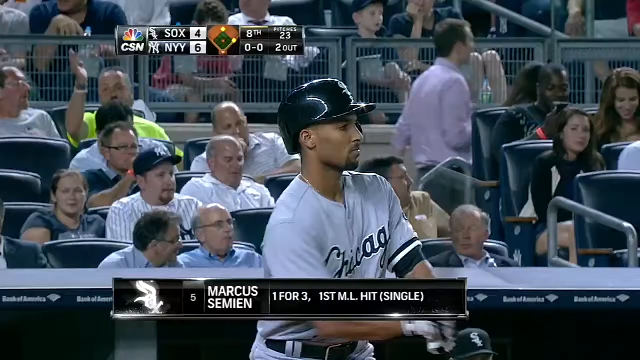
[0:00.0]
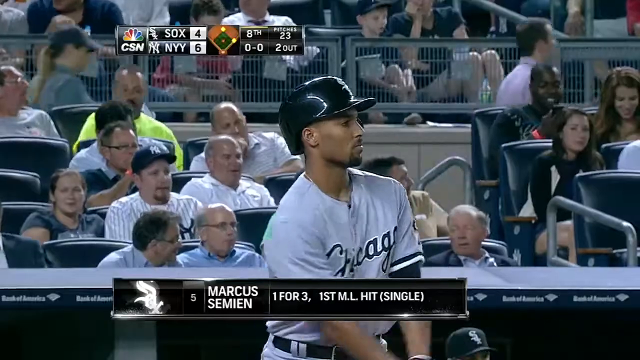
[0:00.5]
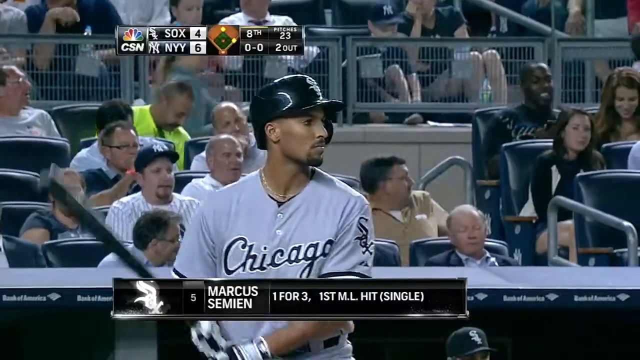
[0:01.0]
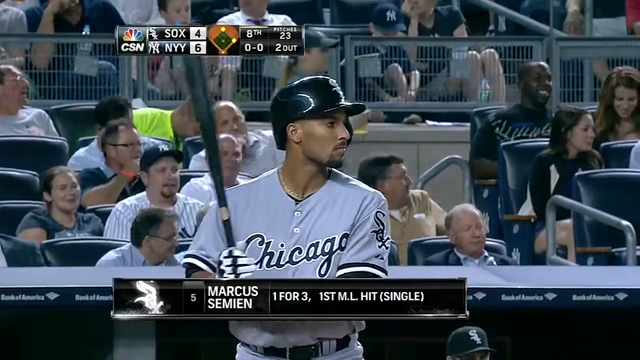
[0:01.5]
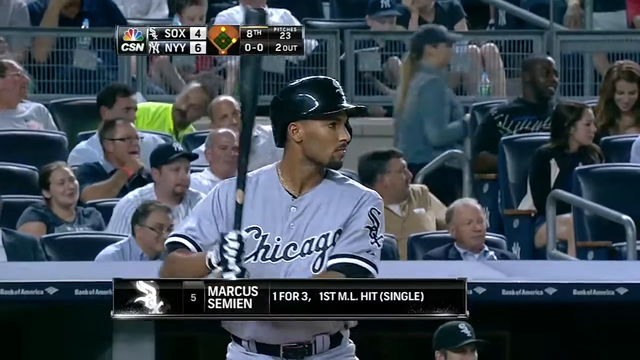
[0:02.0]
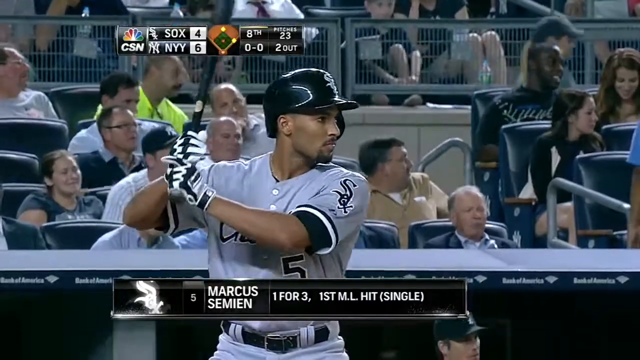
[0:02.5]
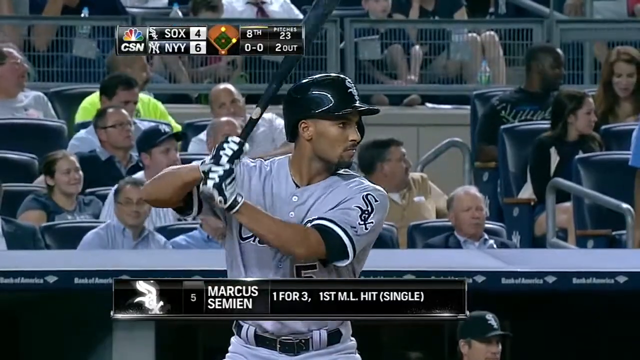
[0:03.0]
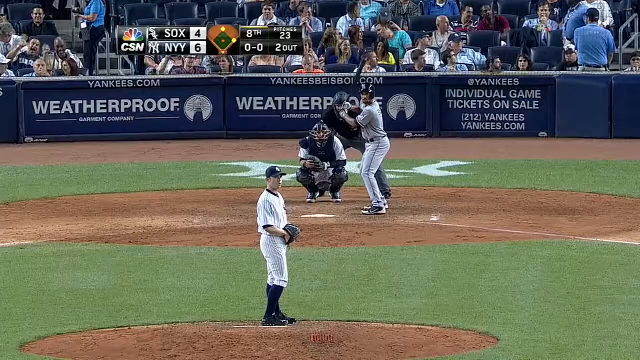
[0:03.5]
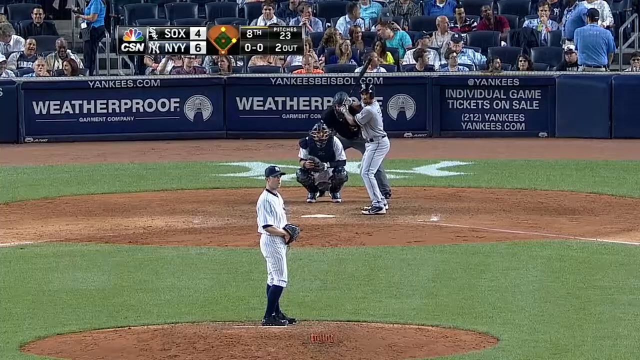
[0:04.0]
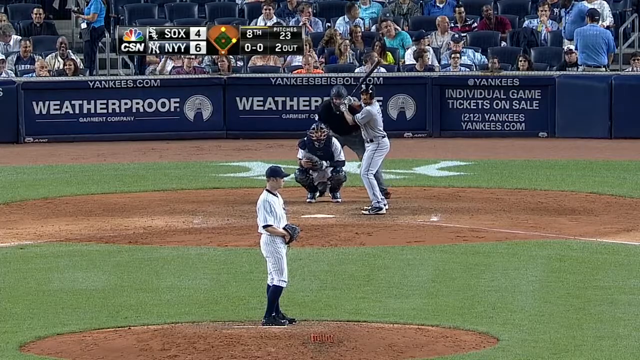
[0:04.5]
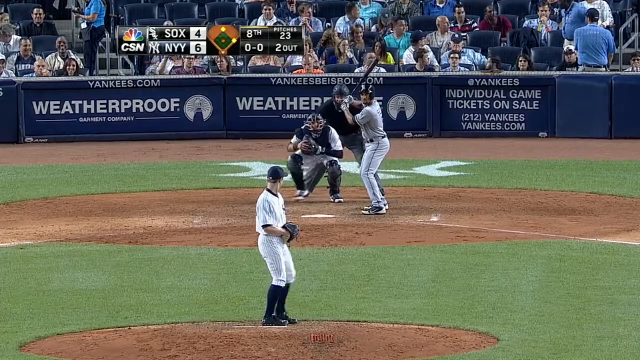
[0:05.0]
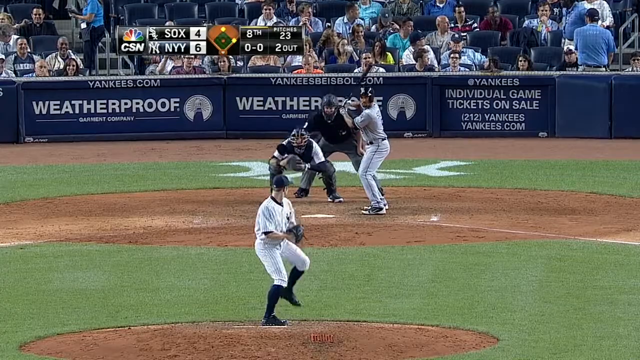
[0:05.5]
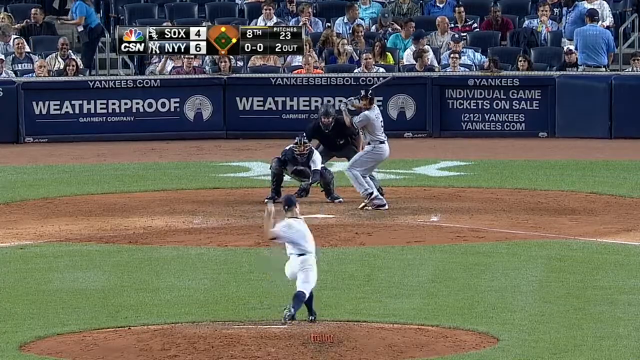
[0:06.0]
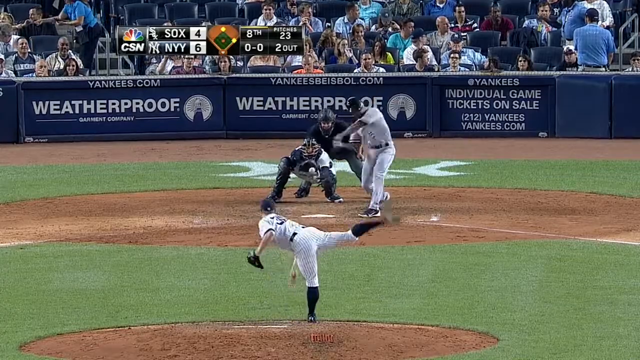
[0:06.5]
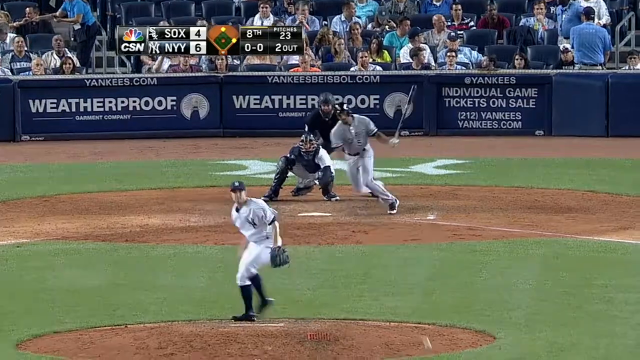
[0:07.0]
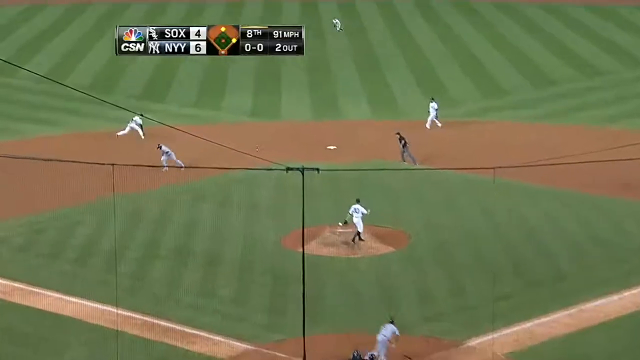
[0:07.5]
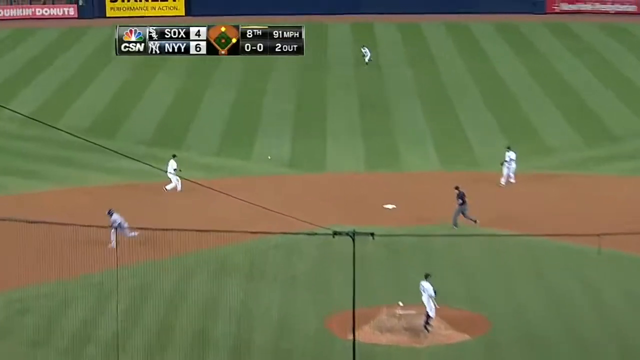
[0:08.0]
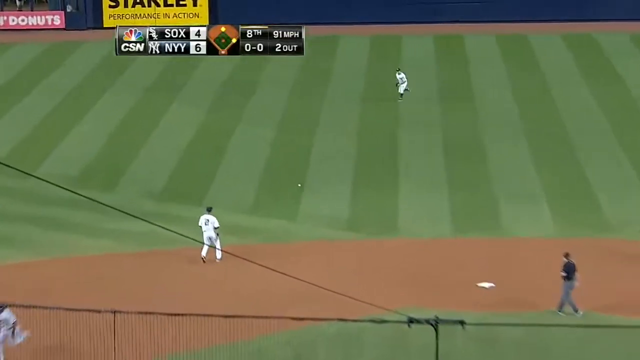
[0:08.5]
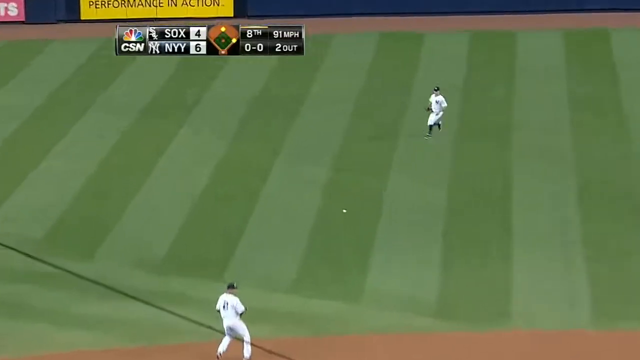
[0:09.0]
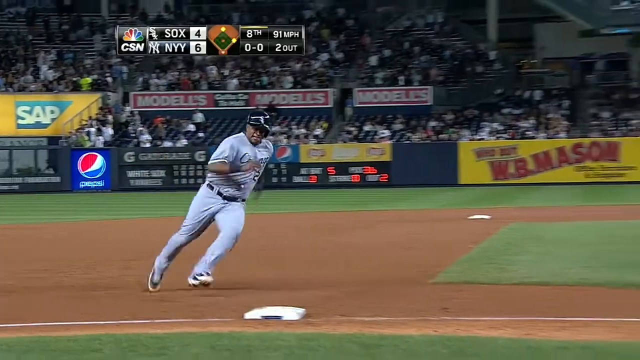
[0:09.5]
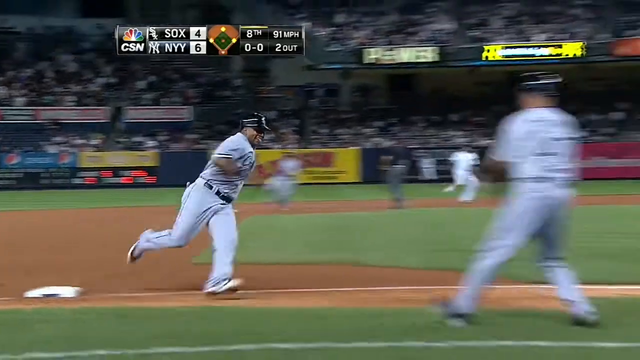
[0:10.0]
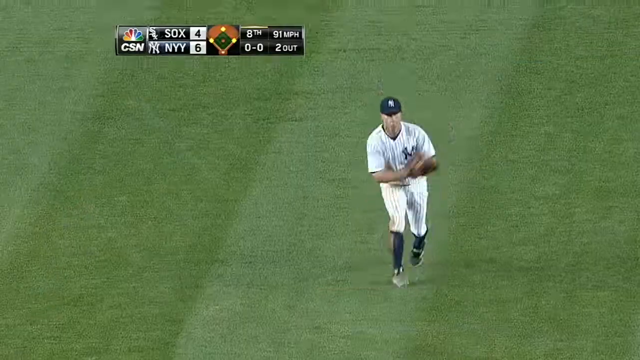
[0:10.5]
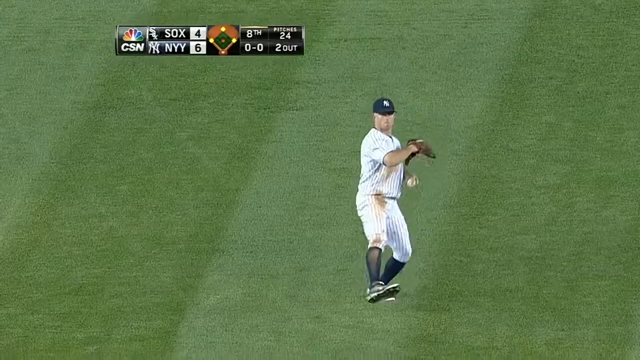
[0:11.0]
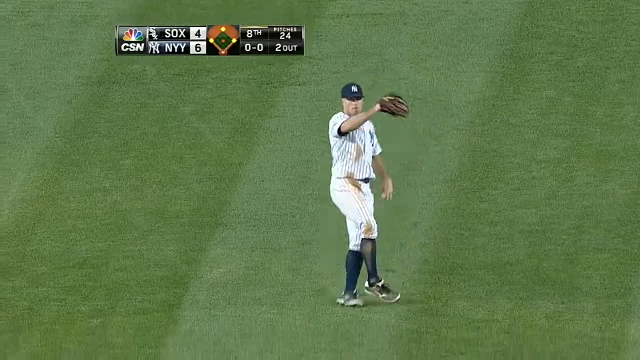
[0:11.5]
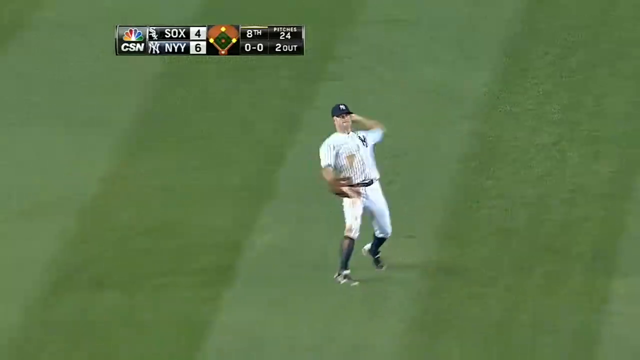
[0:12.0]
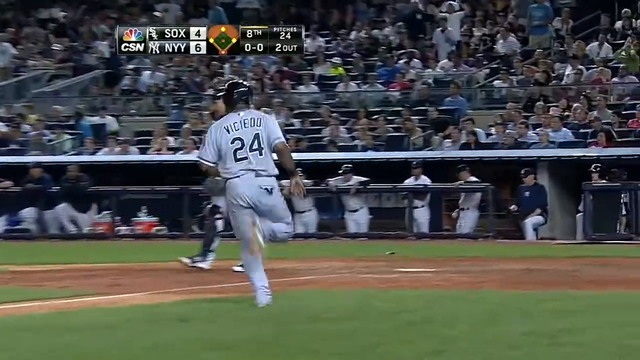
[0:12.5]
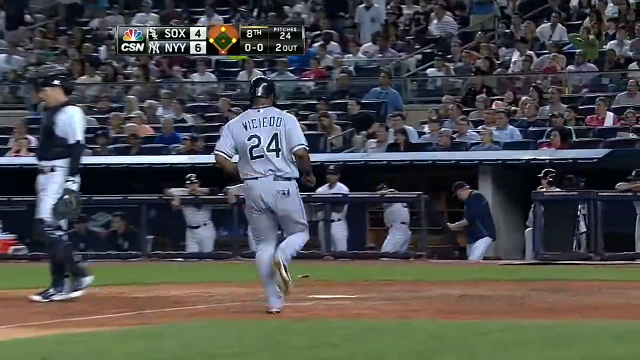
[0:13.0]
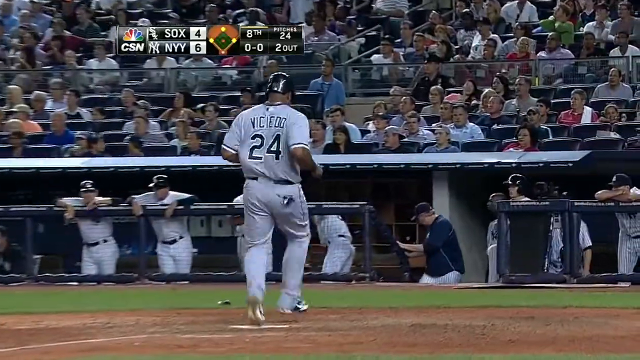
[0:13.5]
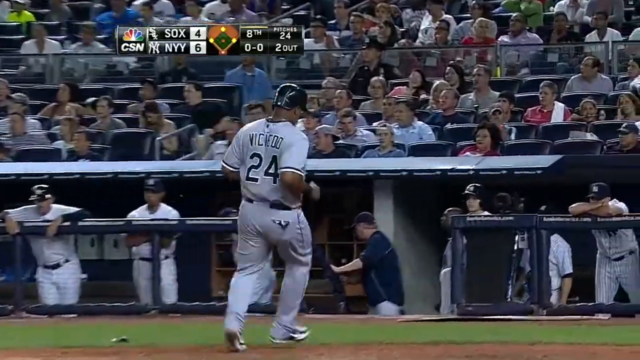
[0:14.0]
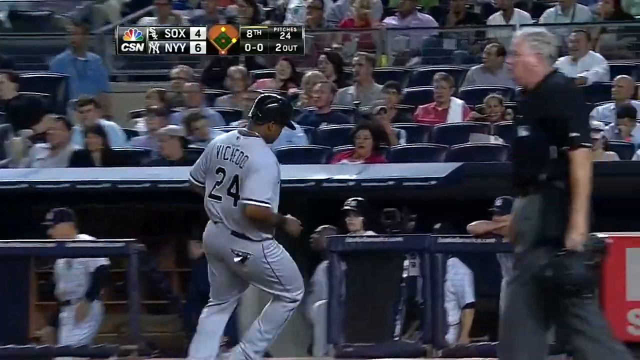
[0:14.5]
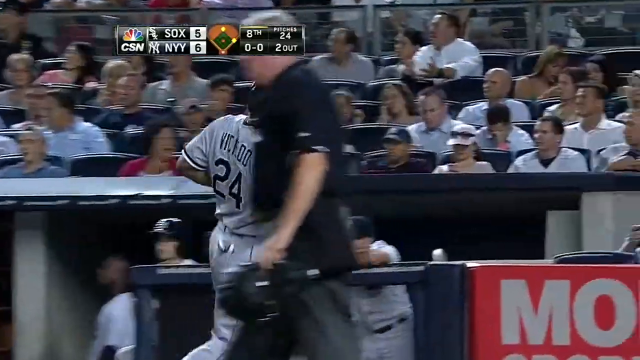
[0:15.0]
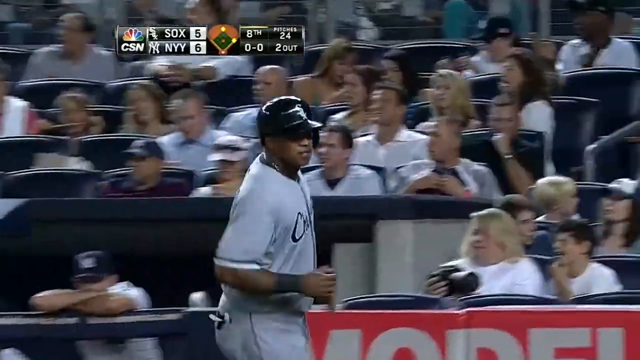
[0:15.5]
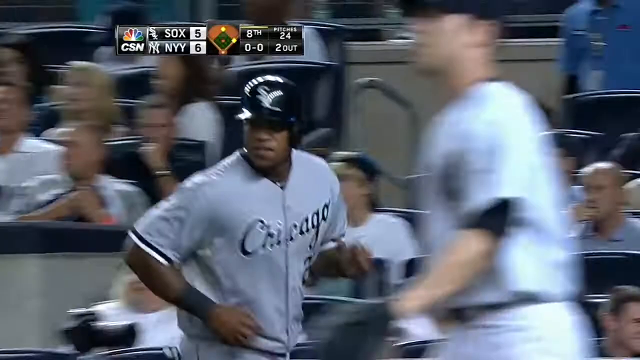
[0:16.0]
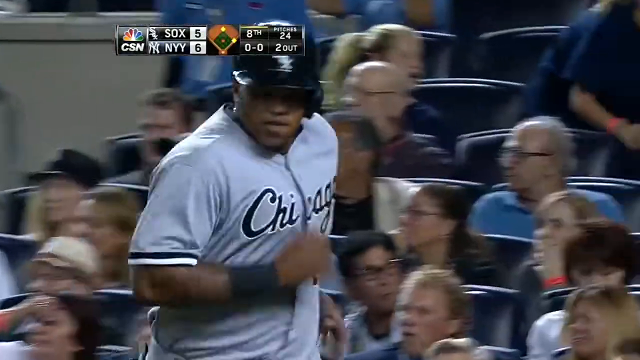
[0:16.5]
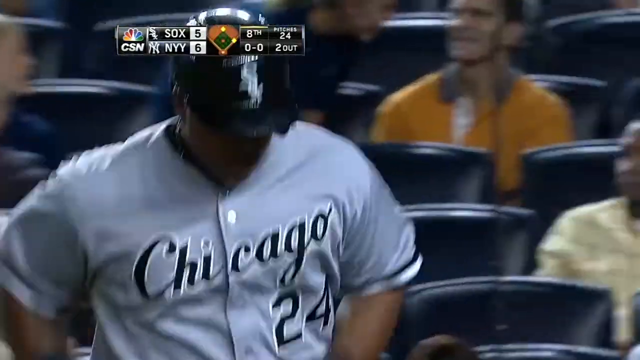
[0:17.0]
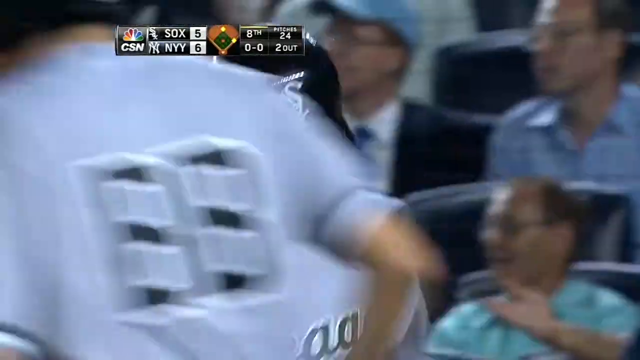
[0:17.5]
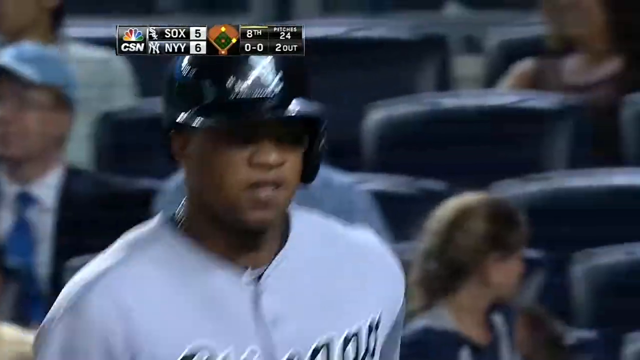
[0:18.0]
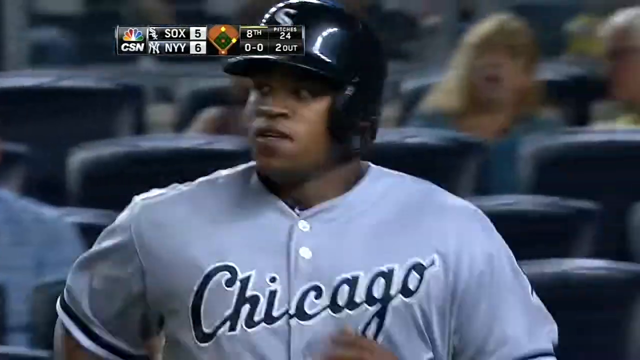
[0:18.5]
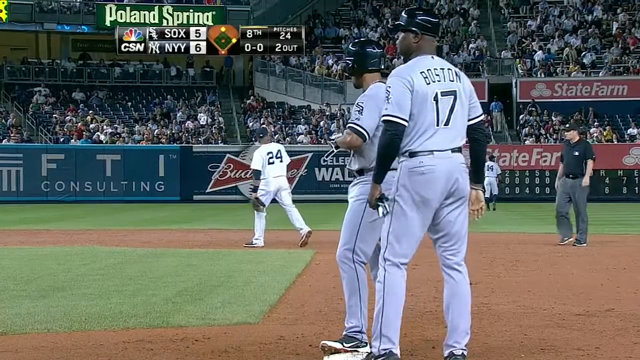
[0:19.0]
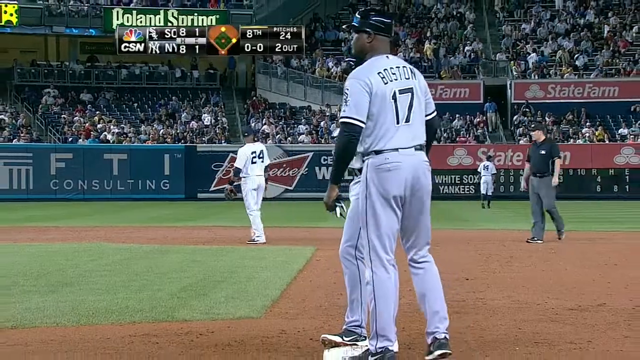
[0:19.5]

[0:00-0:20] A baseball game is shown. In the upper left of the screen the text reads "SOXO" and "NYY", apparently the Sox and the New York Yankees. At the start the score is 4 to 6. The broadcast graphic then reads "eighth 0-0", possibly indicating the eighth inning. A player is shown with the name "Marcus Semien", the numbers "5 1 4 3", and the text "first m.l. hit single". He wears a dark-coloured helmet. It looks like Chicago is batting and the Yankees are pitching. He bats from the right side, hits the ball, and starts running. After the hit, the other players who are on bases start to run, and number 24 keeps going; it is unclear what happens to him.